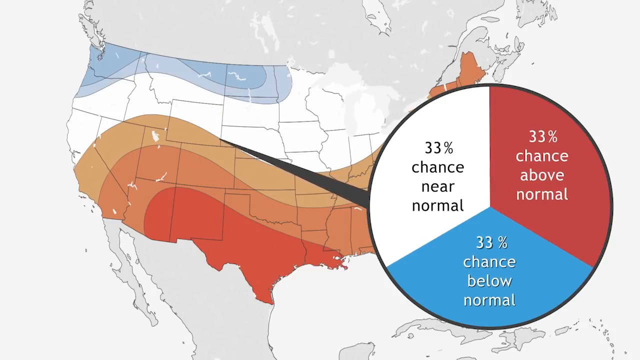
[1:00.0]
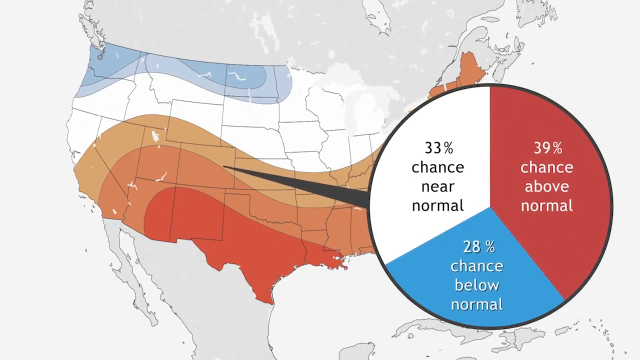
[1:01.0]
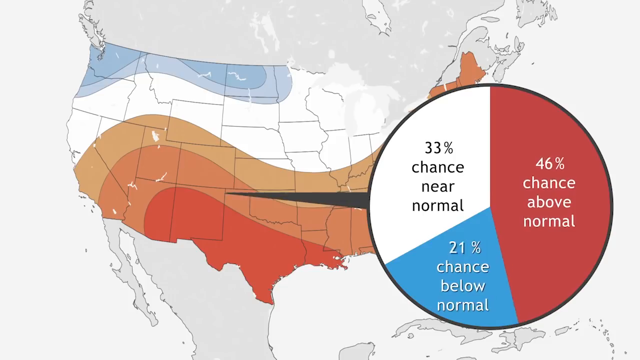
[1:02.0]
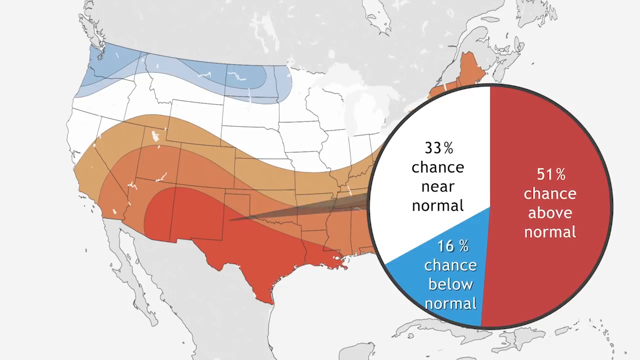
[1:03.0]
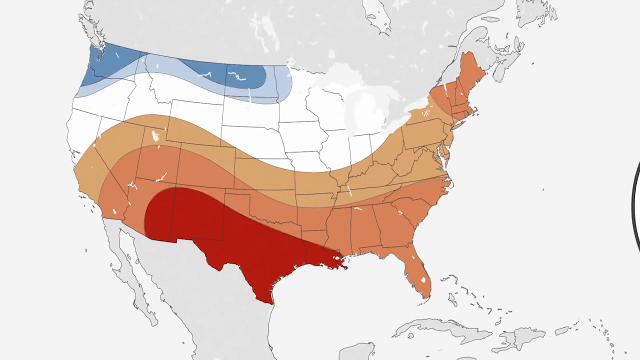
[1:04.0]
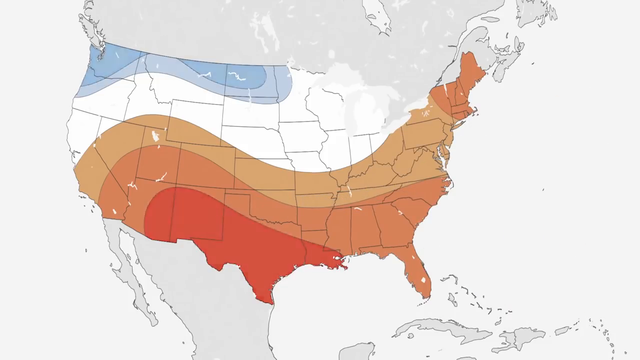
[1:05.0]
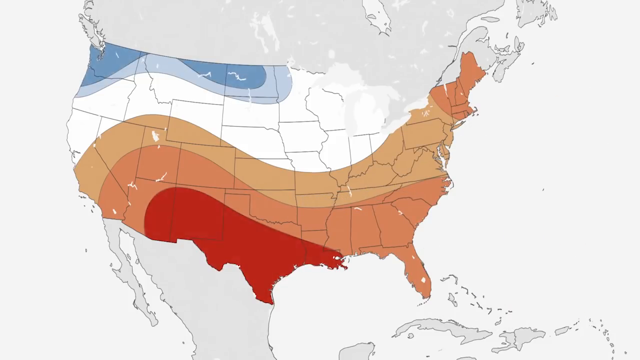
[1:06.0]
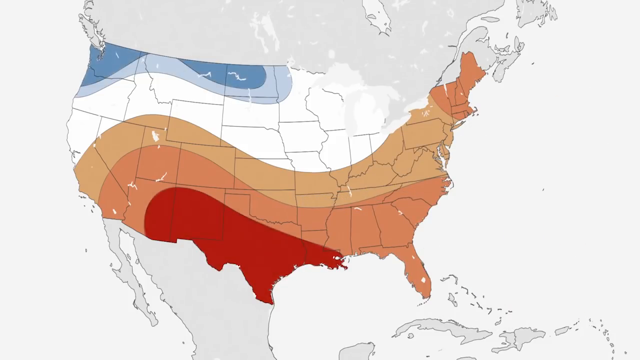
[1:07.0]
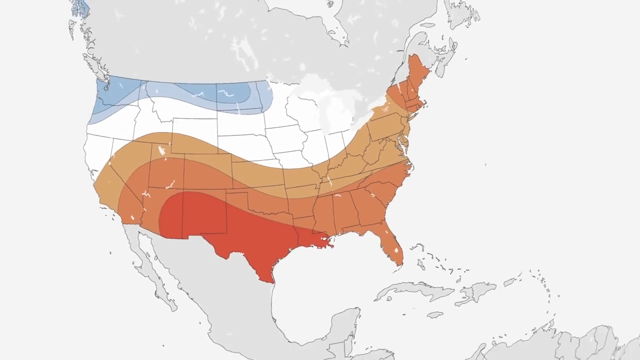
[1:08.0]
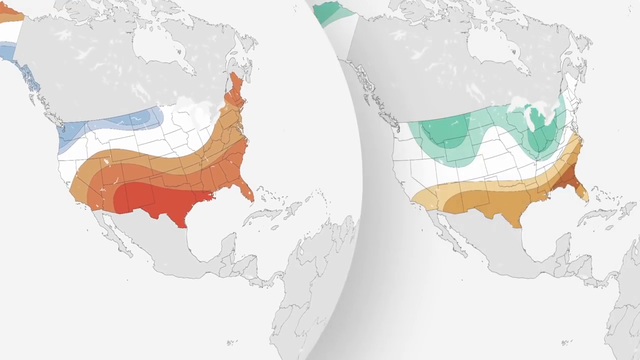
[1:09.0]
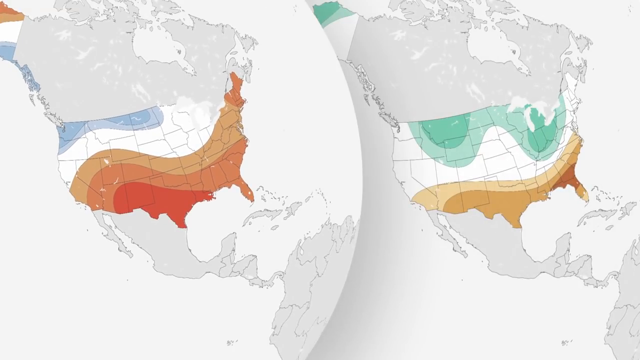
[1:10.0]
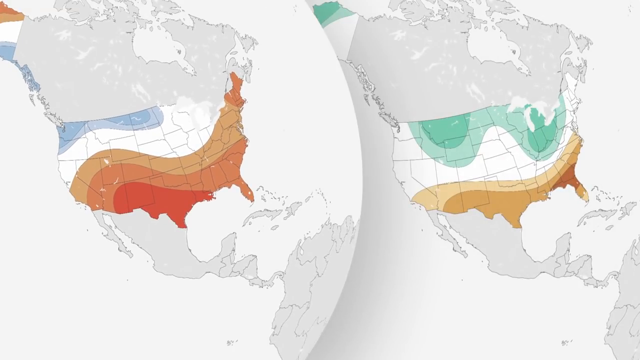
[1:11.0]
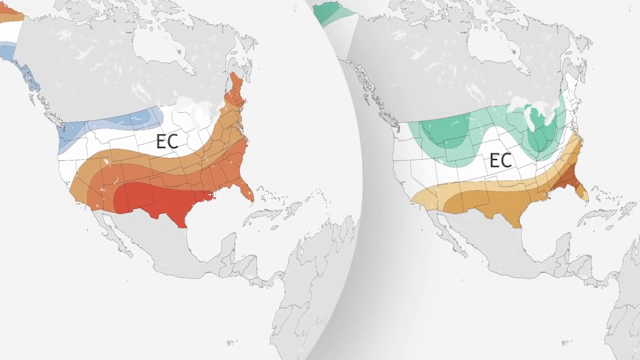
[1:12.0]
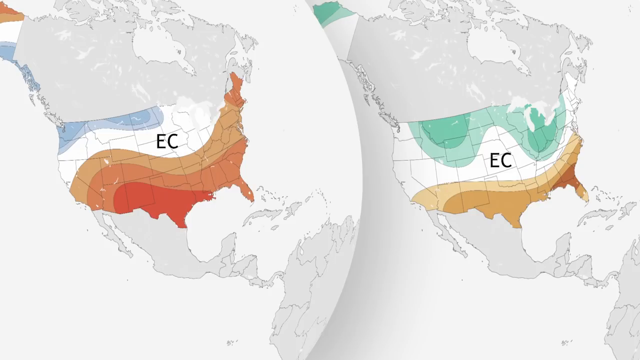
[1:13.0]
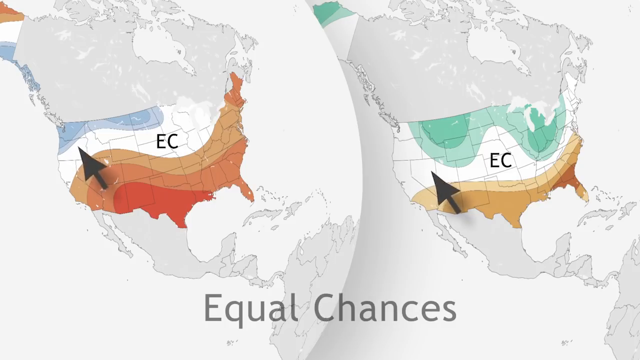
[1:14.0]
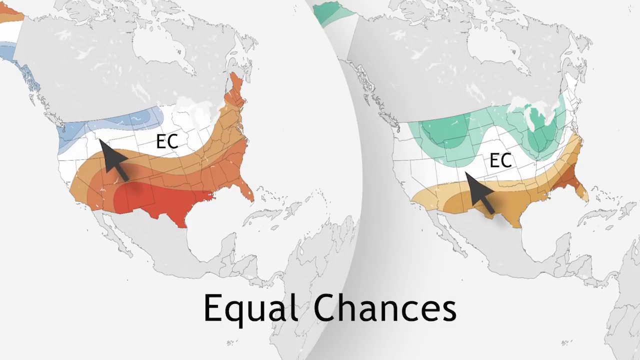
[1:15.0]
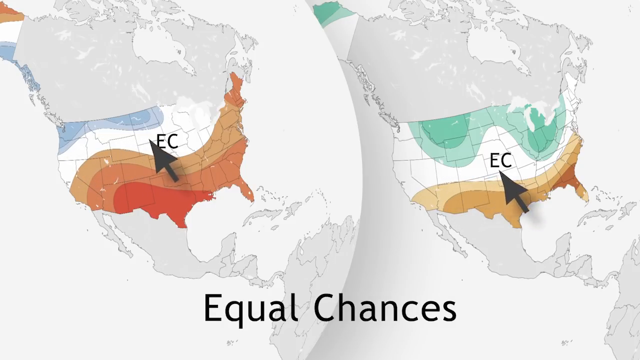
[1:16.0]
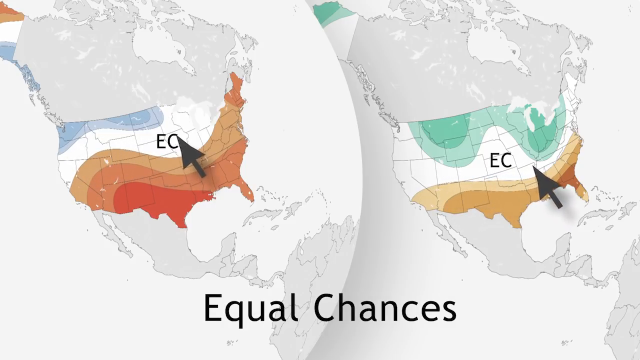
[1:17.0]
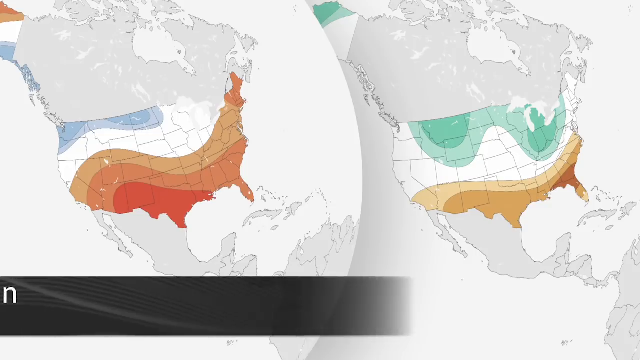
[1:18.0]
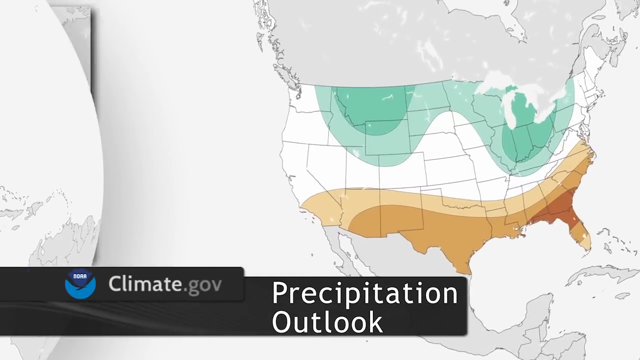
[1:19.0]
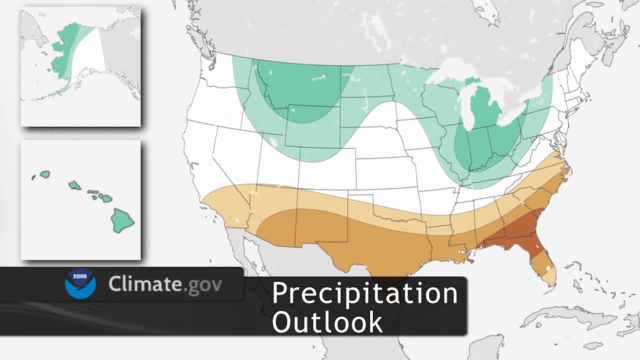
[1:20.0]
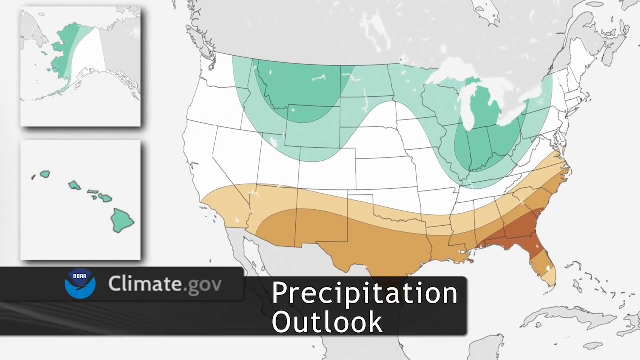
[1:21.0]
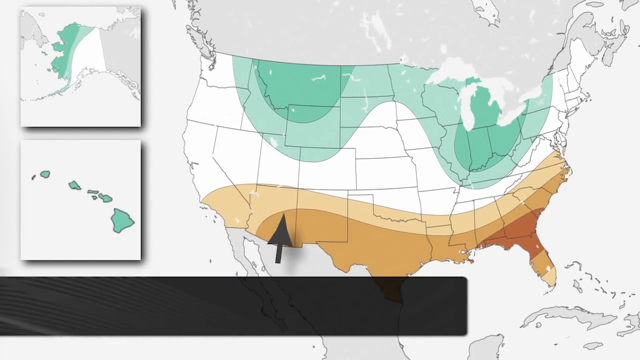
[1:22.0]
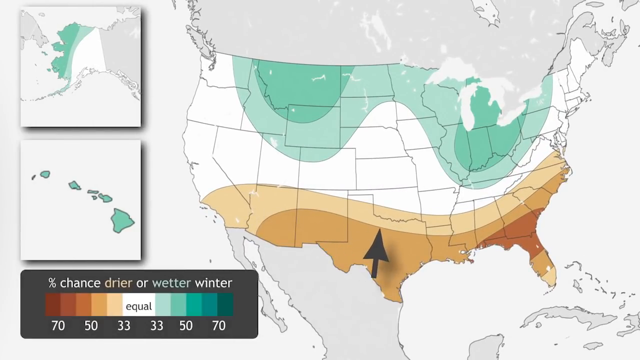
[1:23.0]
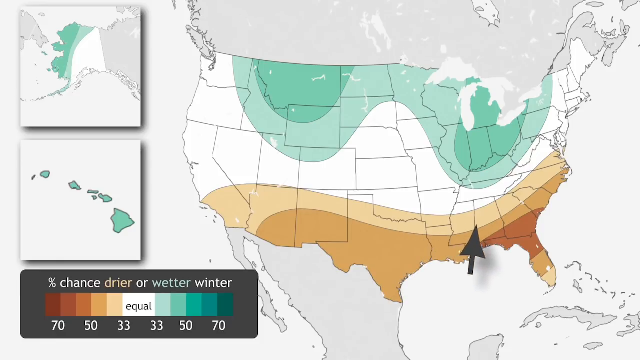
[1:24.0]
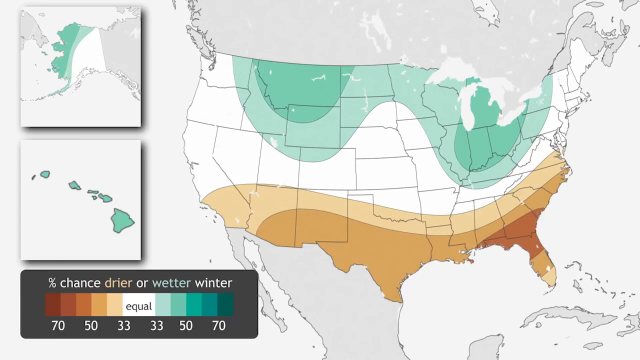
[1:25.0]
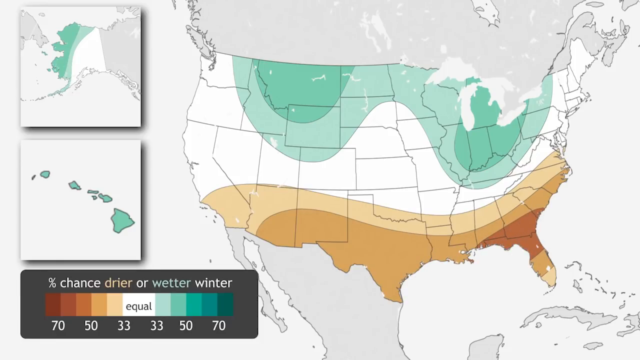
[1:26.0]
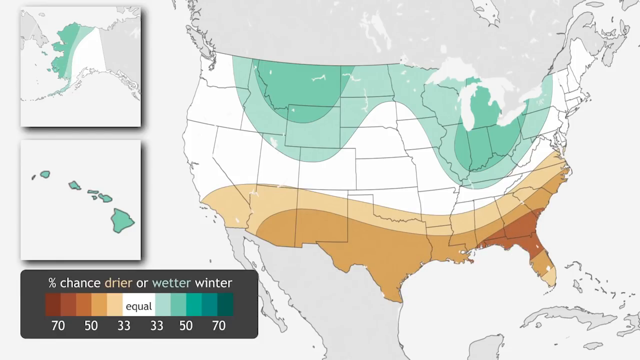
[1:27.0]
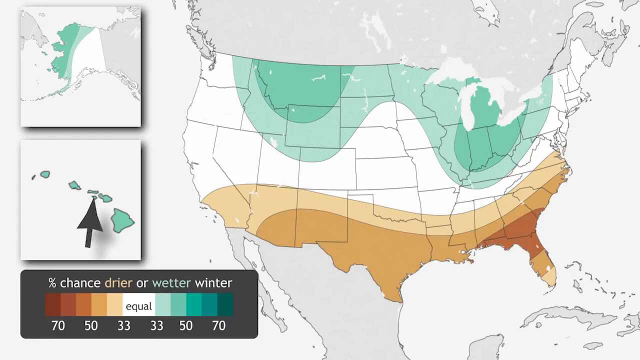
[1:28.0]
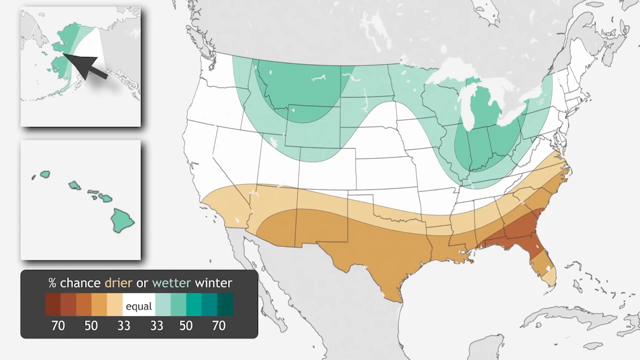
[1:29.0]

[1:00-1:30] A pie chart shows three sections, each with an equal 33% chance: near normal, above normal and below normal temperature. The chance of above normal then rises to 53%. What appears to be a side-by-side comparison of the globe follows, apparently showing greening with less snowfall around the Canadian border, opening up to grass plains and more trees, and the display indicates an equal chance of this area either freezing or greening in the next year. A precipitation outlook is then shown, with a lot of precipitation around Texas and Louisiana and arrows pointing to Alaska and Hawaii.